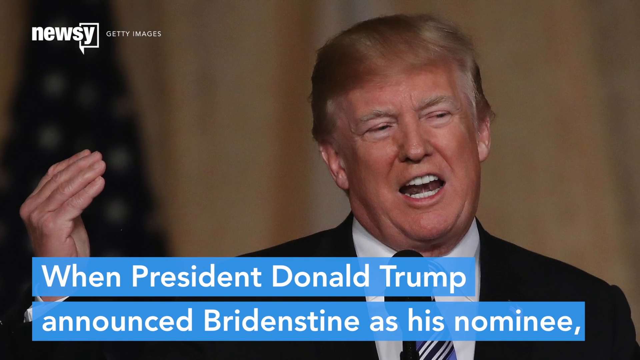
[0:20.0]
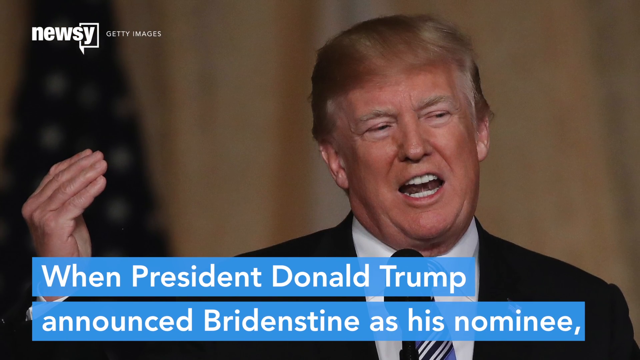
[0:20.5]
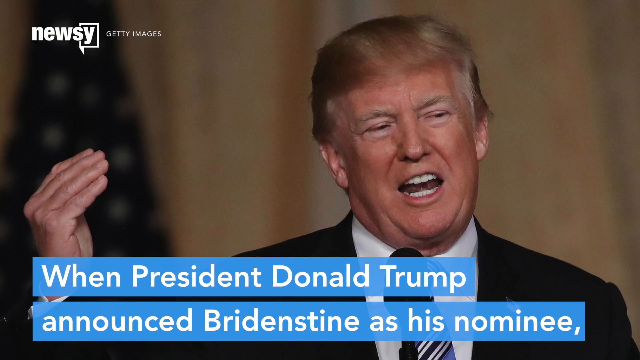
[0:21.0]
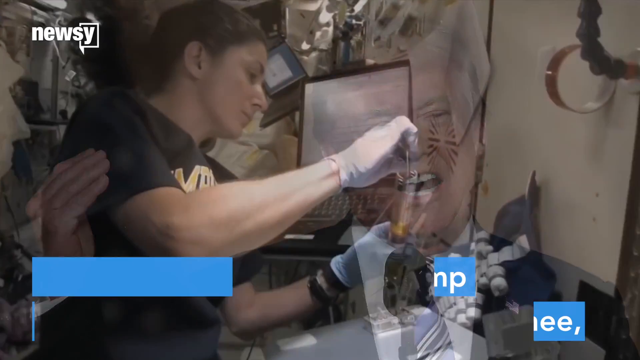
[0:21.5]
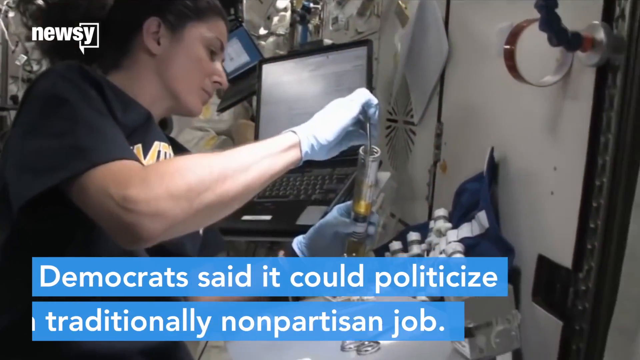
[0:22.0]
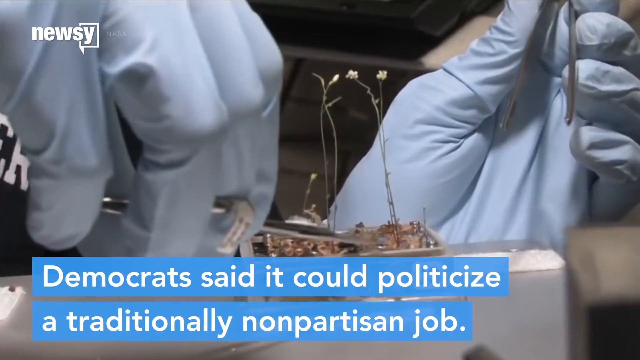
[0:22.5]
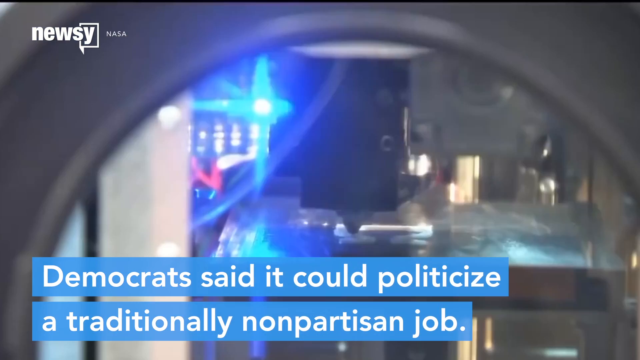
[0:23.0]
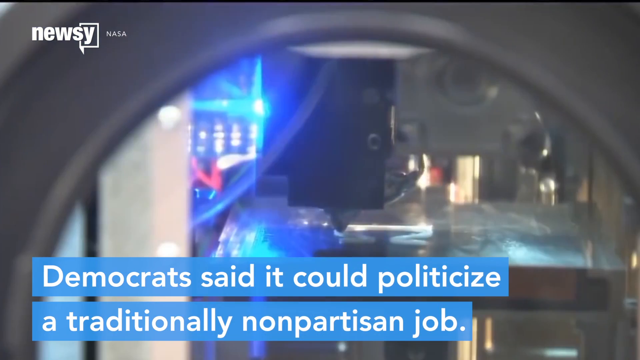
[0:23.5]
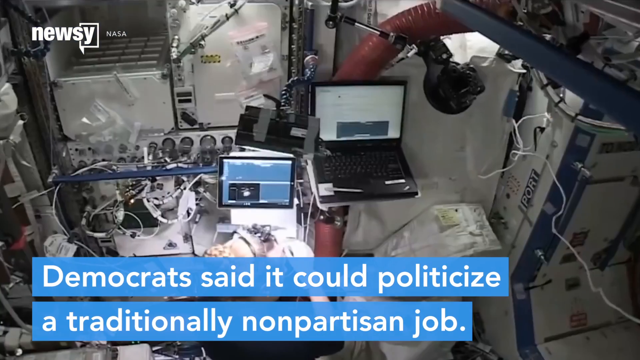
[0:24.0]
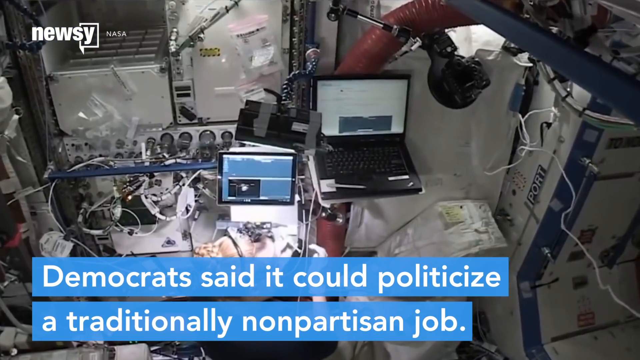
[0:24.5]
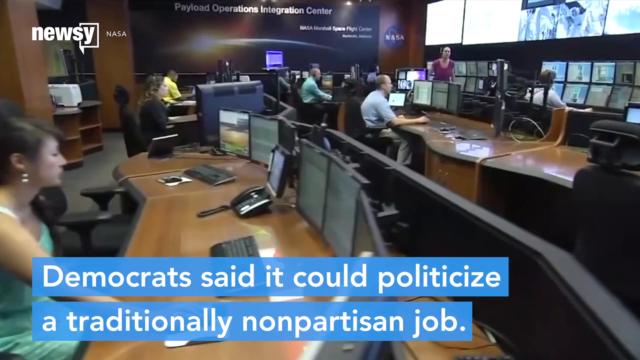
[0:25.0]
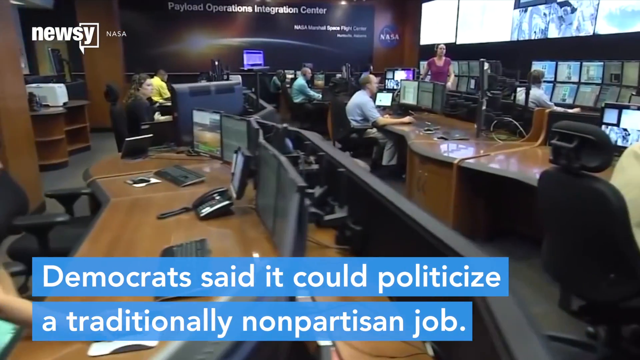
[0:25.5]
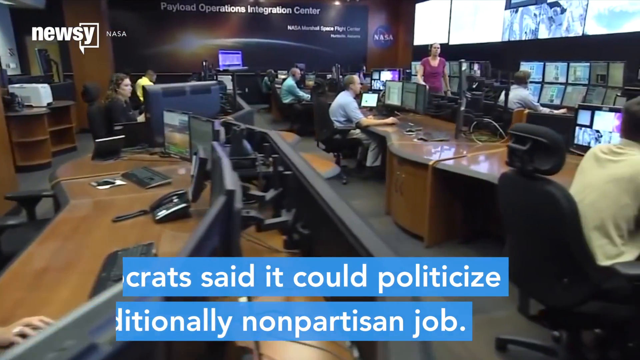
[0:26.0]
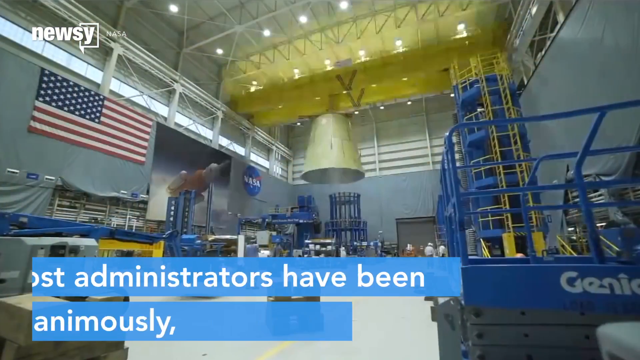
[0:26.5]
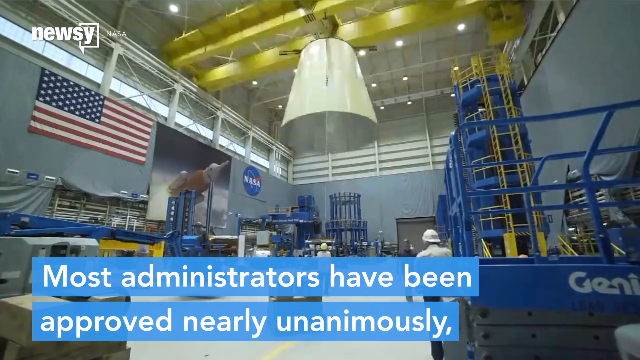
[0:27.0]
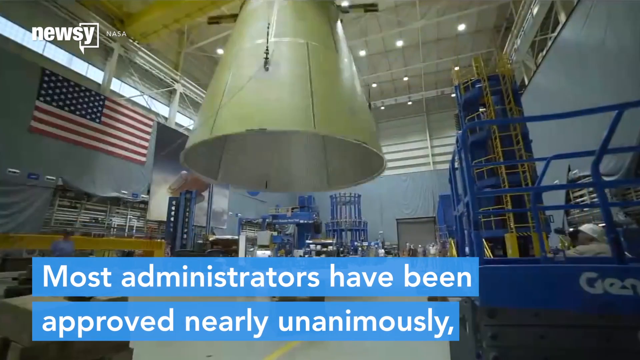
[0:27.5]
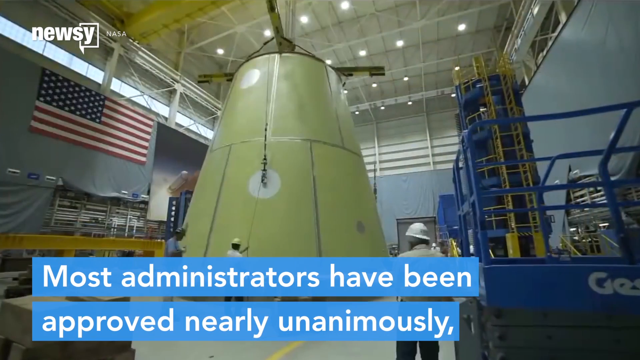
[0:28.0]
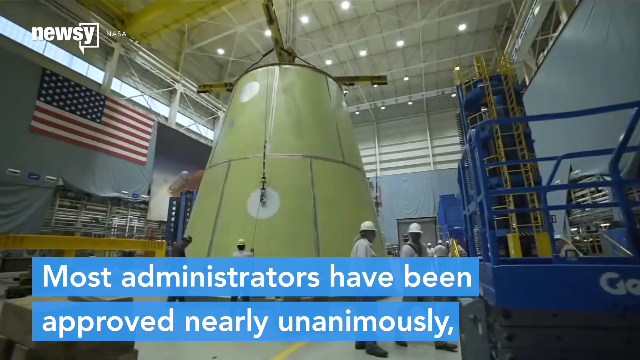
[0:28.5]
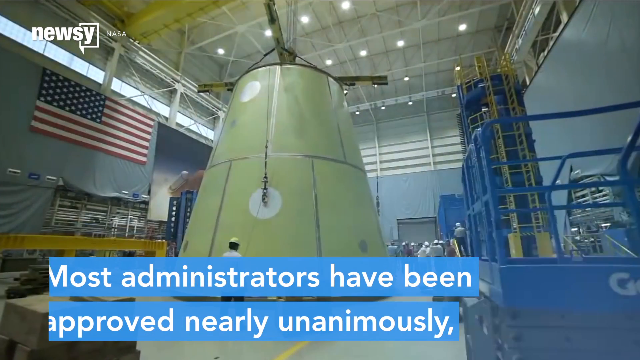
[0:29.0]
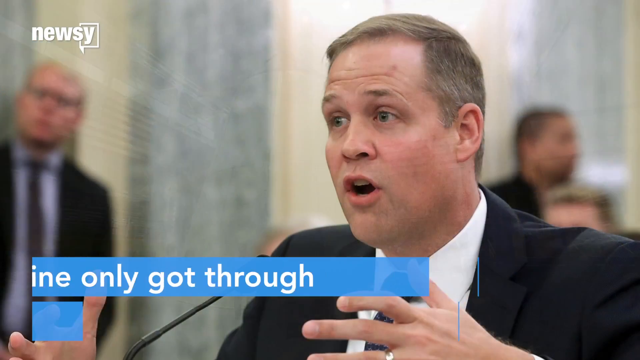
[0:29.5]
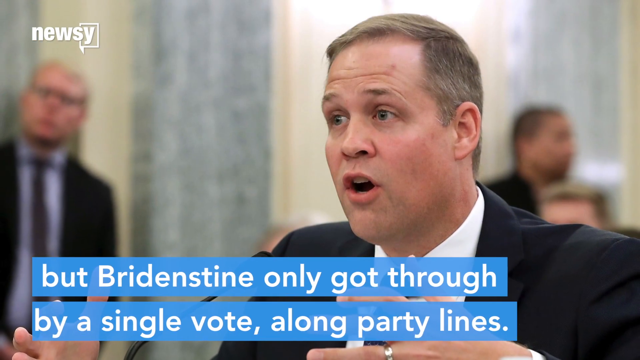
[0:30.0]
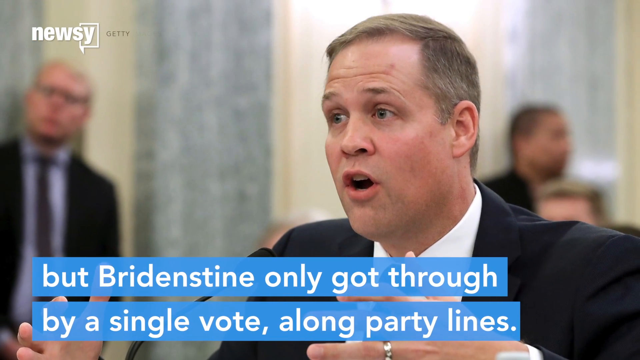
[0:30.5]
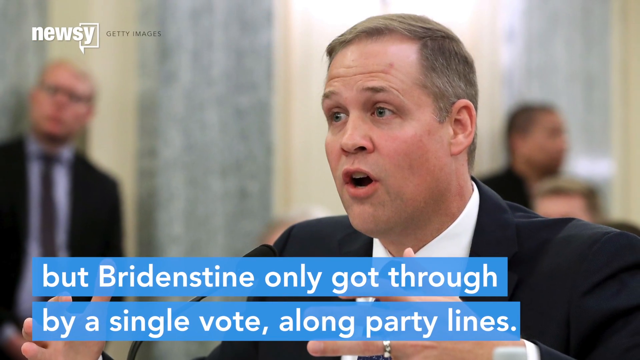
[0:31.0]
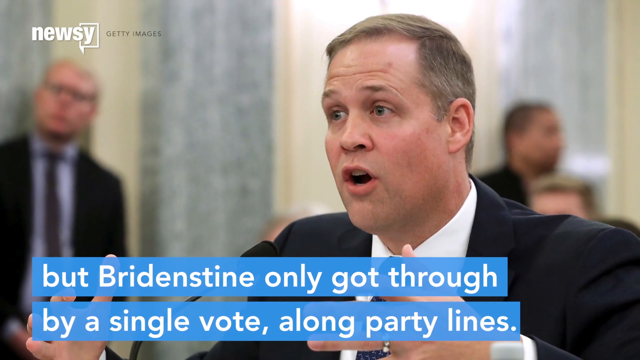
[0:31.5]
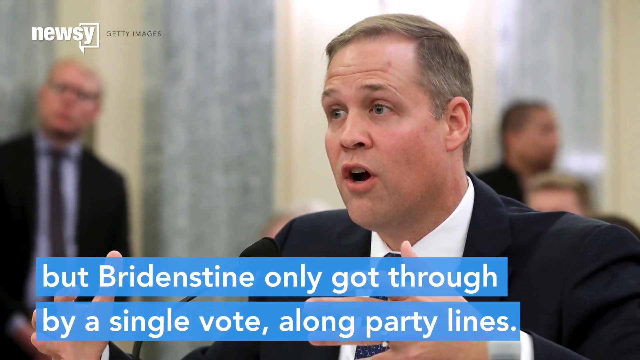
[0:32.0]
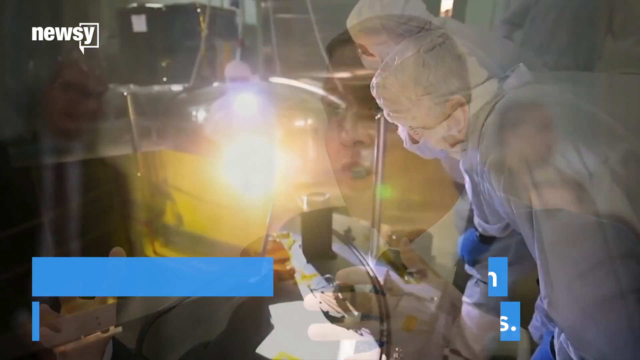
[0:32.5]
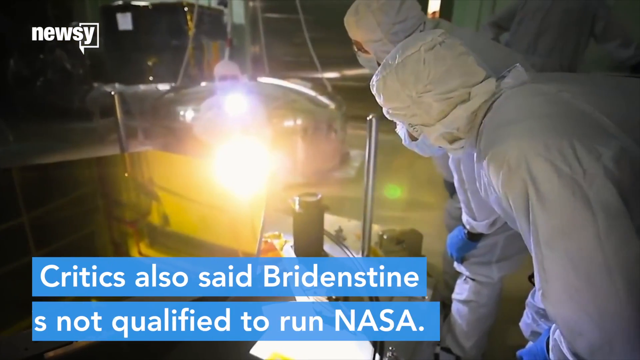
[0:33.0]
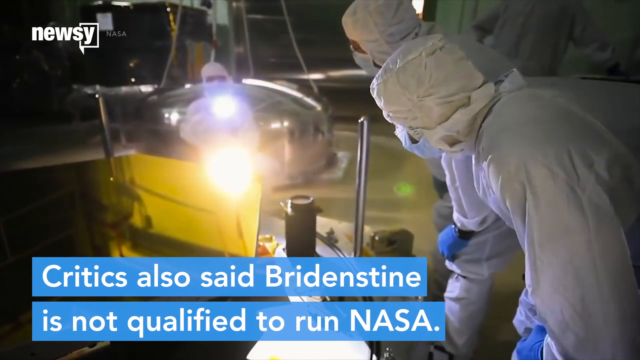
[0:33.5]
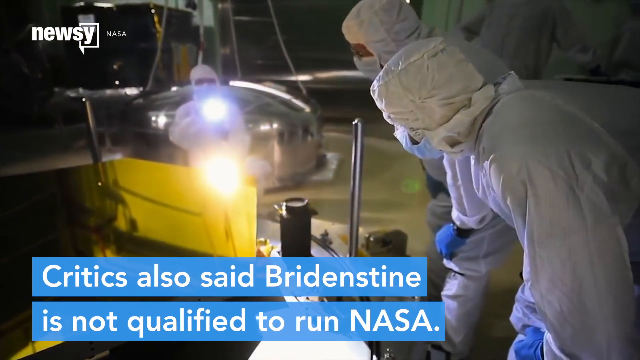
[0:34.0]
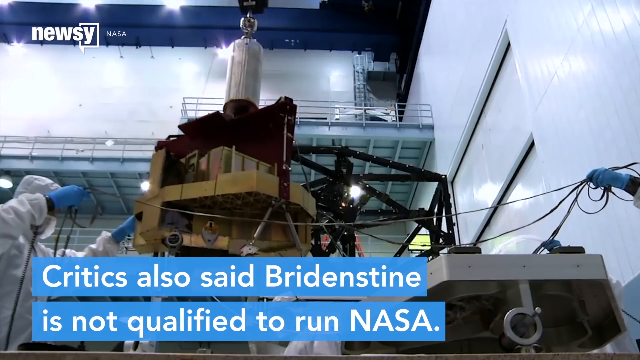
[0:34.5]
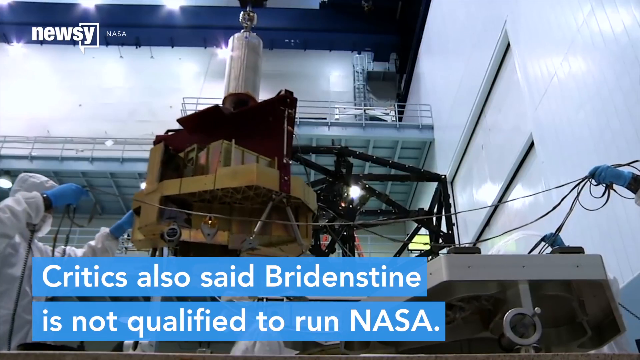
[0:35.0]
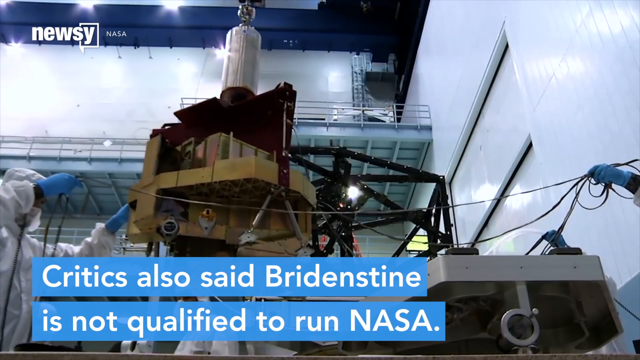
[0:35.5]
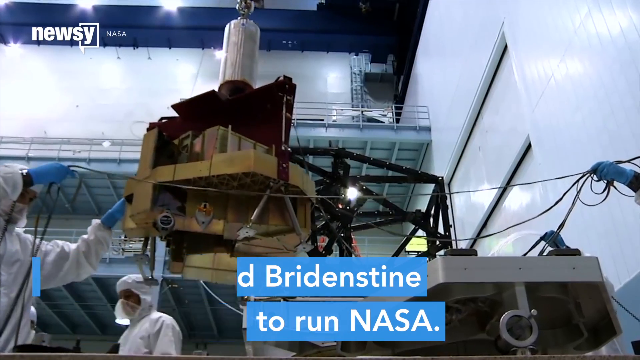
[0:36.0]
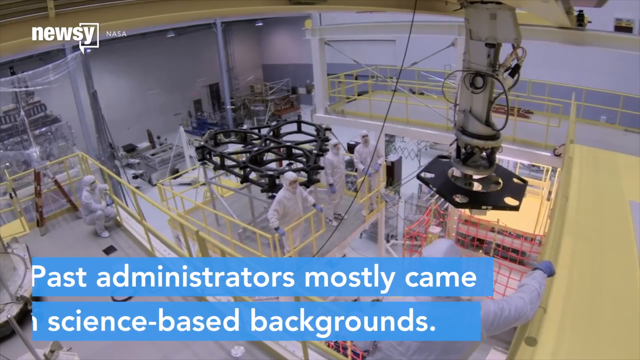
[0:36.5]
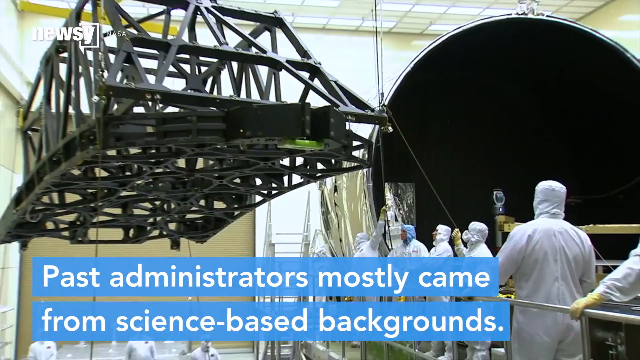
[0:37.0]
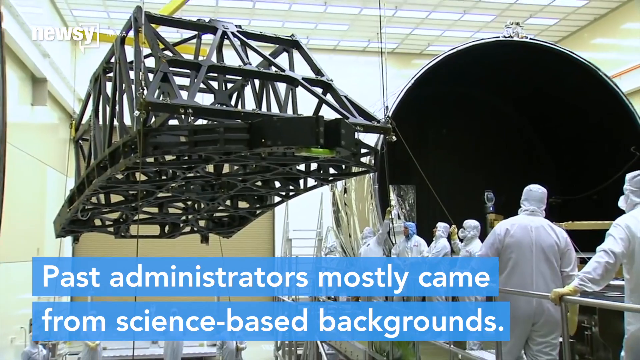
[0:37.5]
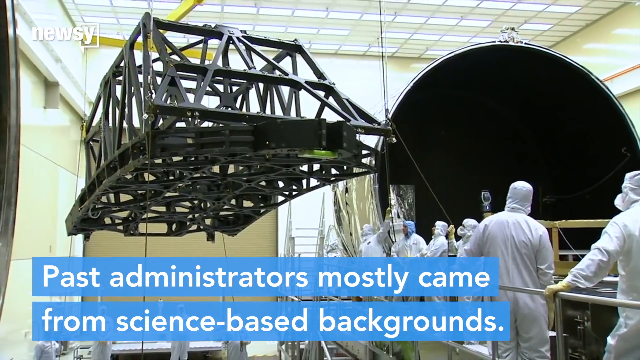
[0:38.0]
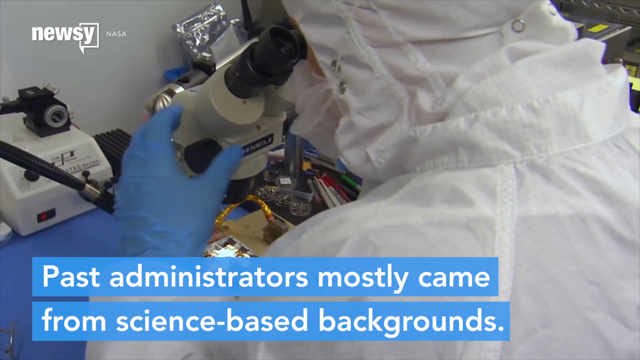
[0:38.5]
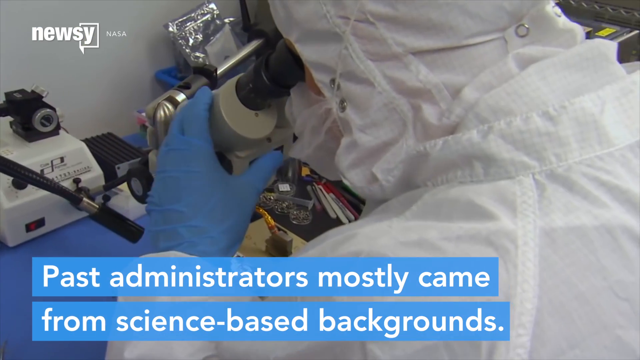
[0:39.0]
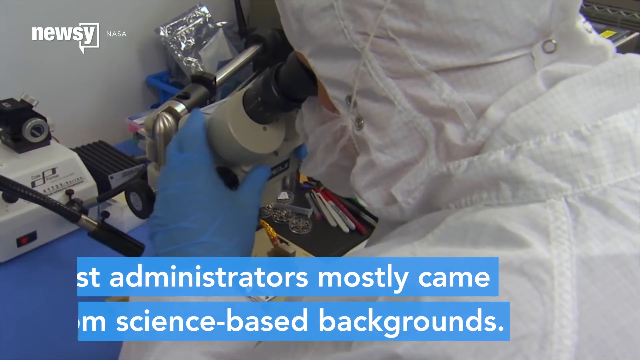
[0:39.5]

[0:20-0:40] President Donald Trump, wearing a black suit, a white tie and a white shirt, stands in front of a mic. He seems to be talking, with his right hand raised in what seems to be a hand gesture. Below him, white writing on a blue background says "When President Donald Trump announced Breitstein as his nominee Democrats say they will politicize a traditionally non-partisan job." Next comes what looks like a technology lab, with a white machine operating and someone sitting behind multiple computers with different machines inside. The scene changes to people sitting behind desks with screens on them, busy at their desks, in a building with grey floors and a screen mounted at the top in front. Then the inside of what looks like a construction warehouse is shown, followed by another warehouse that looks like a construction warehouse, where the workers wear white. Someone, also in white attire, operates a stethoscope.